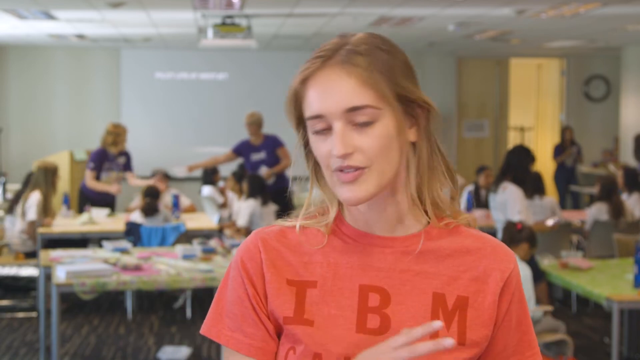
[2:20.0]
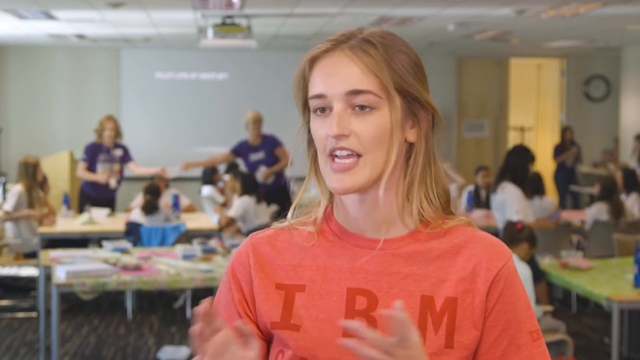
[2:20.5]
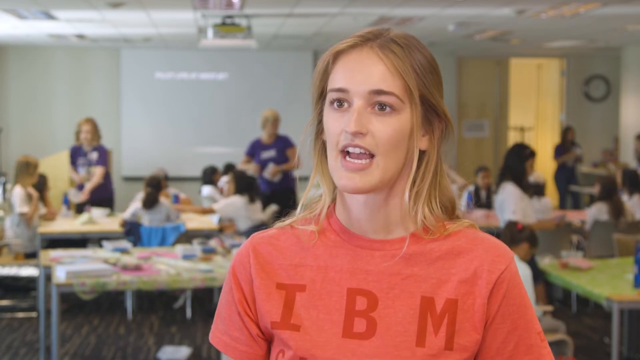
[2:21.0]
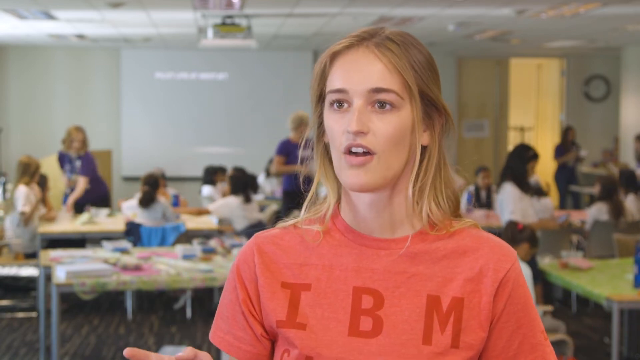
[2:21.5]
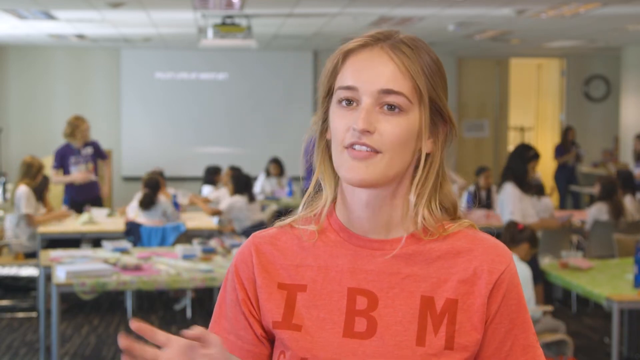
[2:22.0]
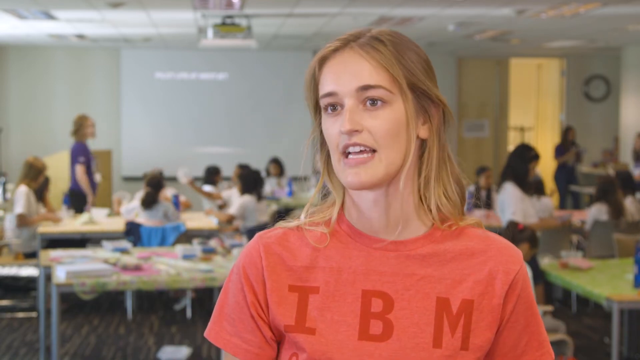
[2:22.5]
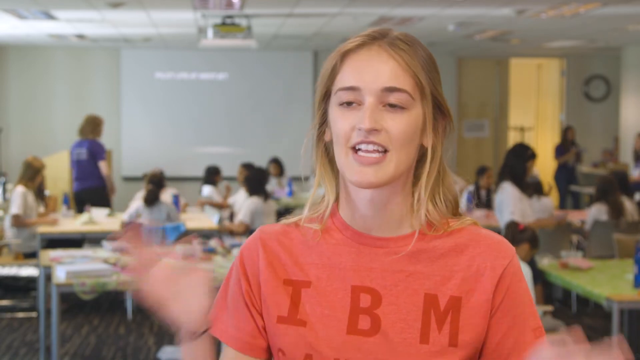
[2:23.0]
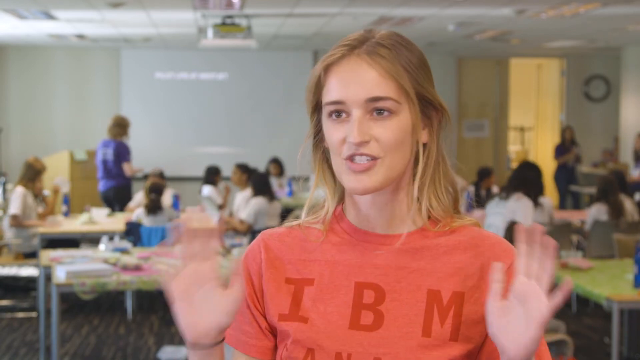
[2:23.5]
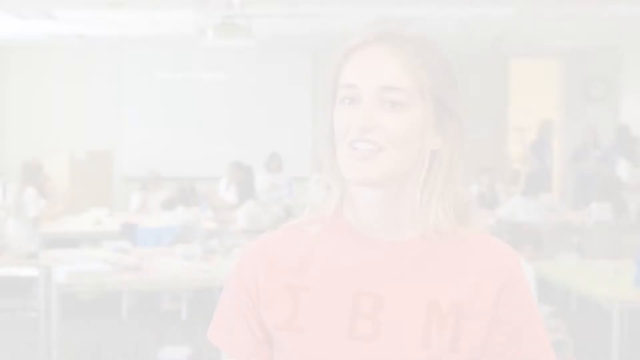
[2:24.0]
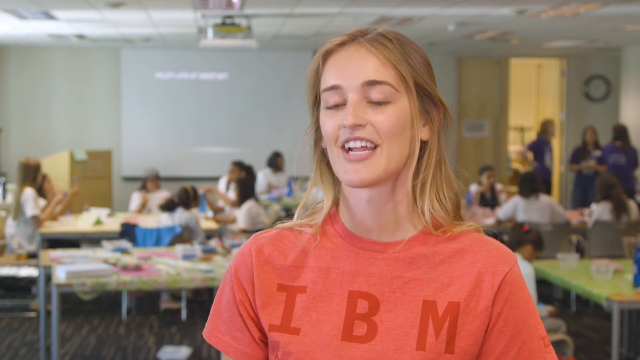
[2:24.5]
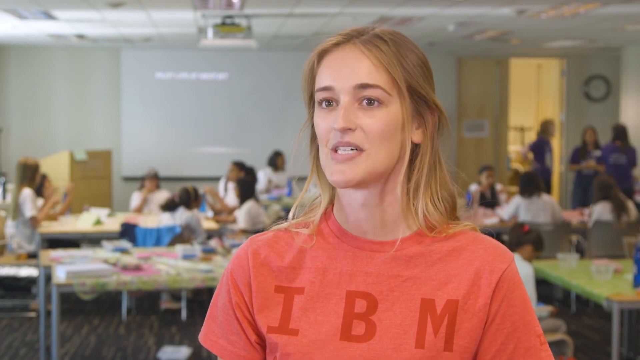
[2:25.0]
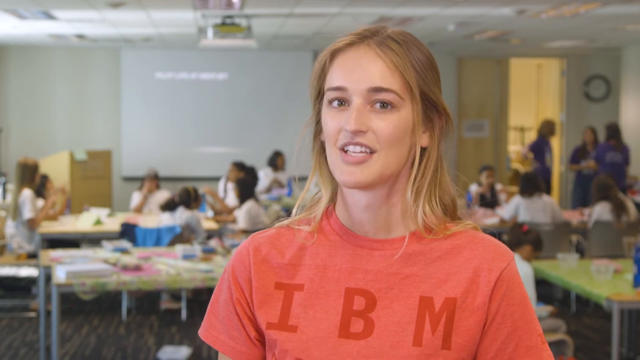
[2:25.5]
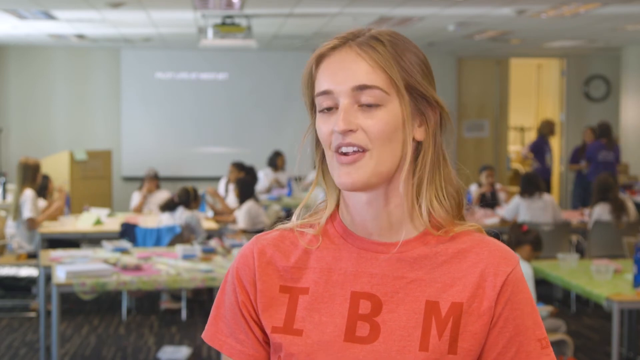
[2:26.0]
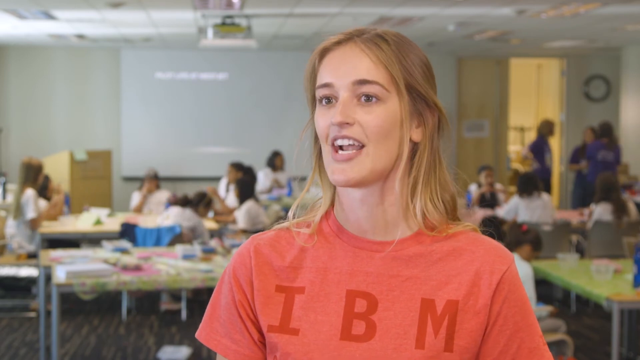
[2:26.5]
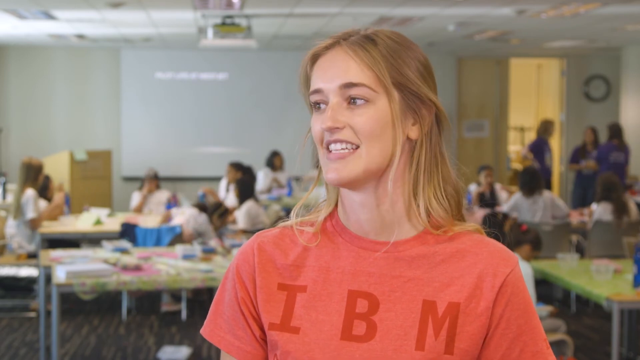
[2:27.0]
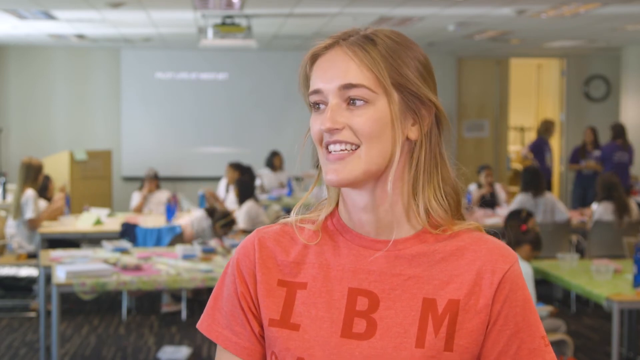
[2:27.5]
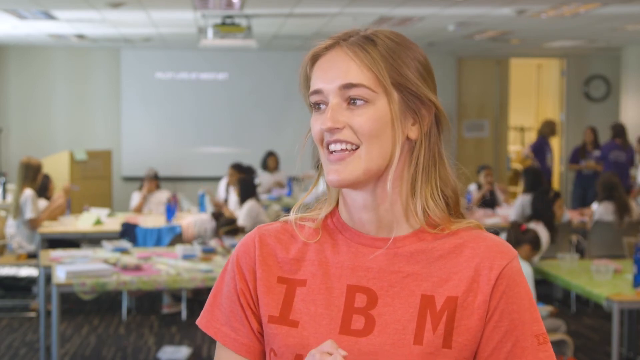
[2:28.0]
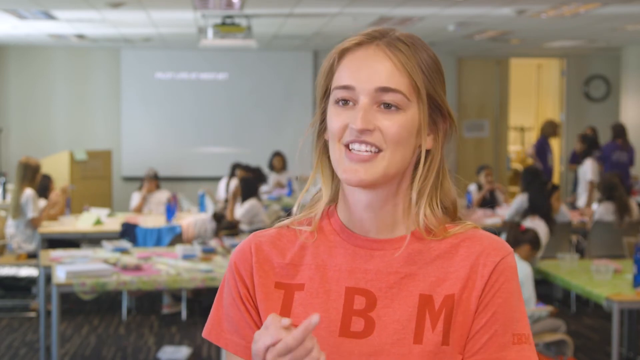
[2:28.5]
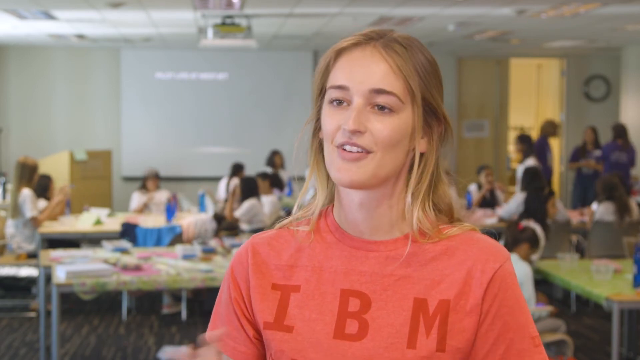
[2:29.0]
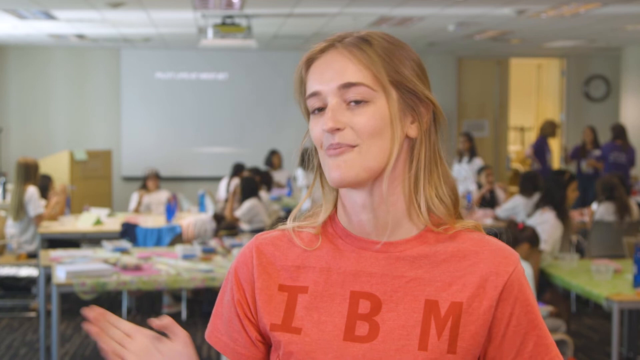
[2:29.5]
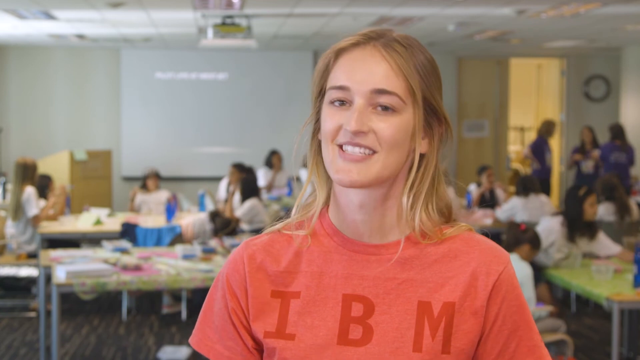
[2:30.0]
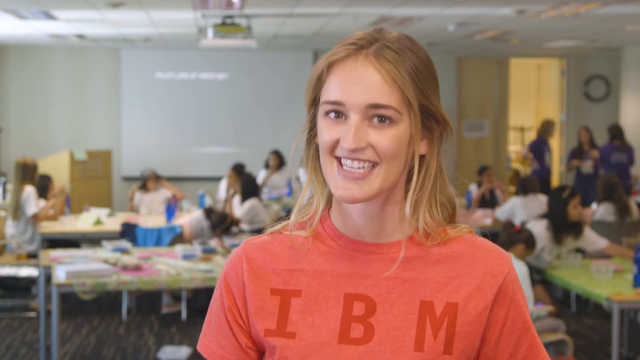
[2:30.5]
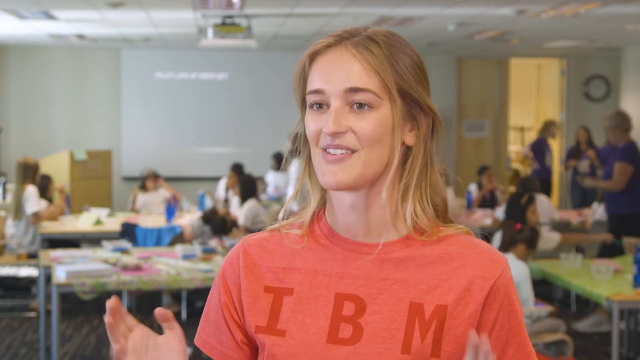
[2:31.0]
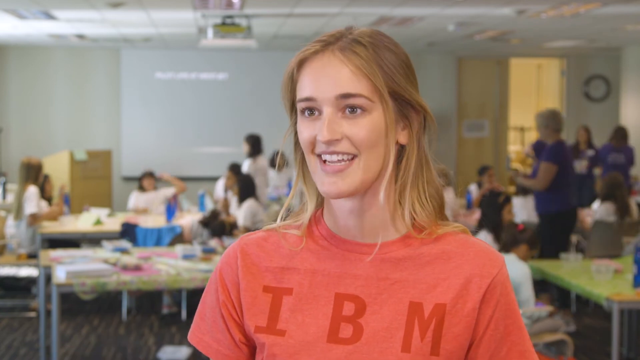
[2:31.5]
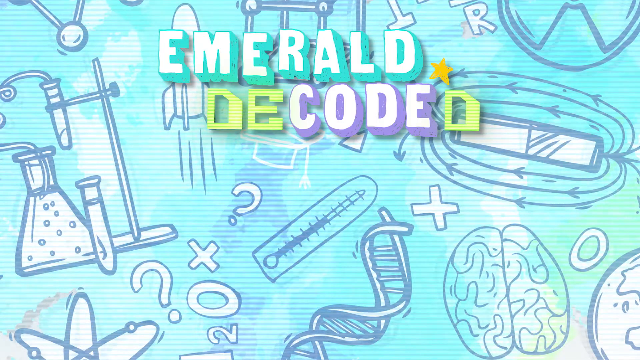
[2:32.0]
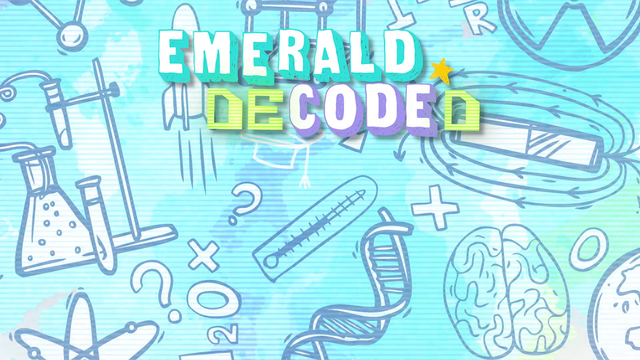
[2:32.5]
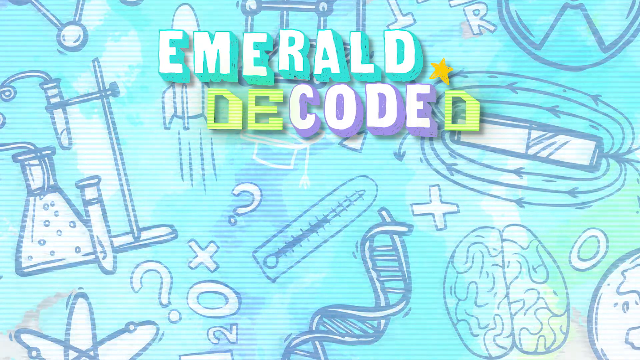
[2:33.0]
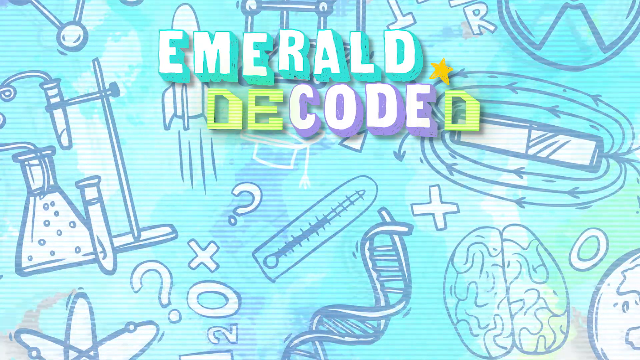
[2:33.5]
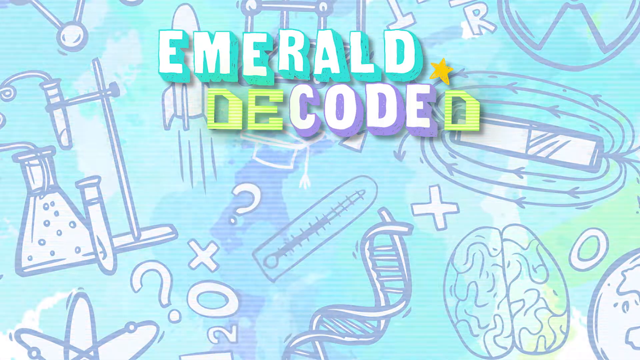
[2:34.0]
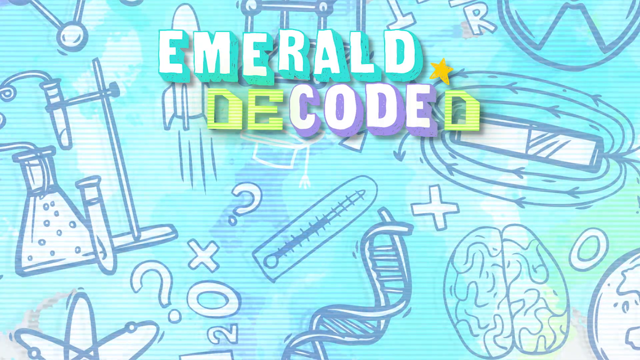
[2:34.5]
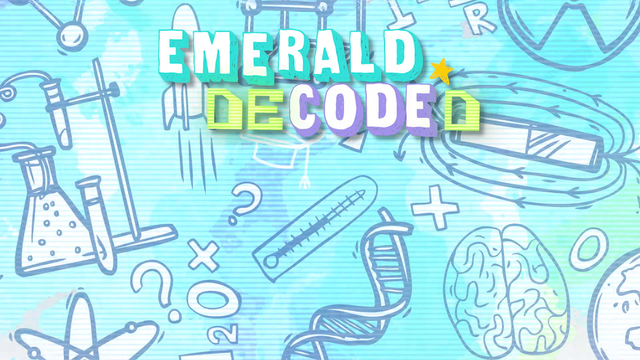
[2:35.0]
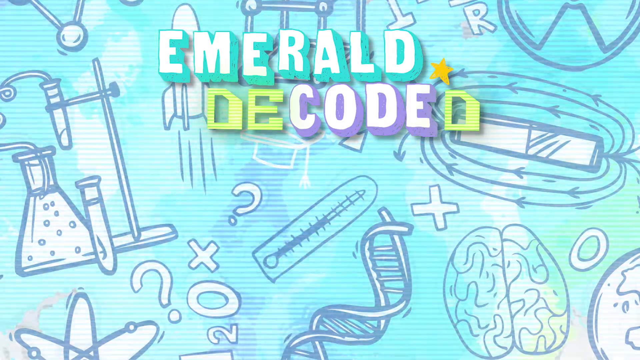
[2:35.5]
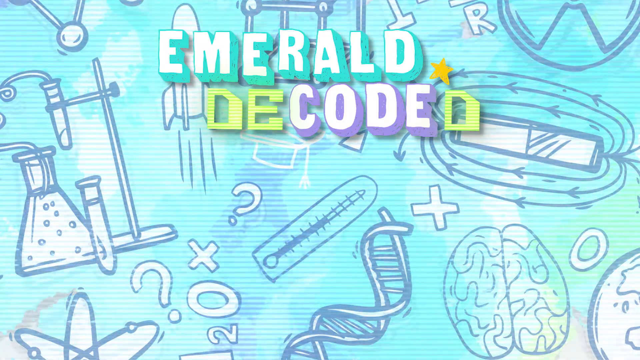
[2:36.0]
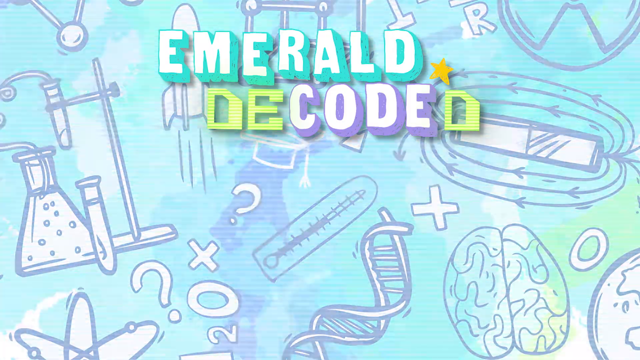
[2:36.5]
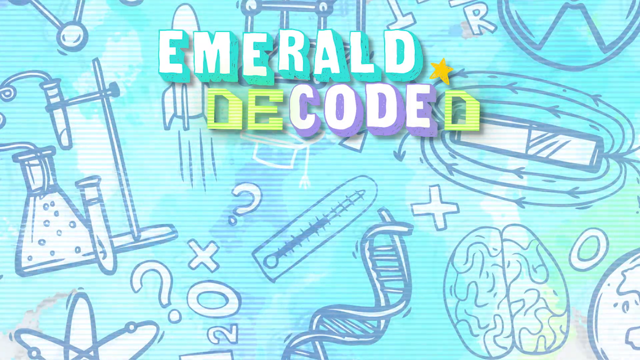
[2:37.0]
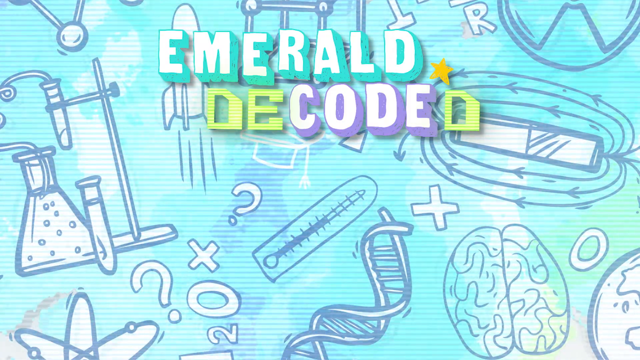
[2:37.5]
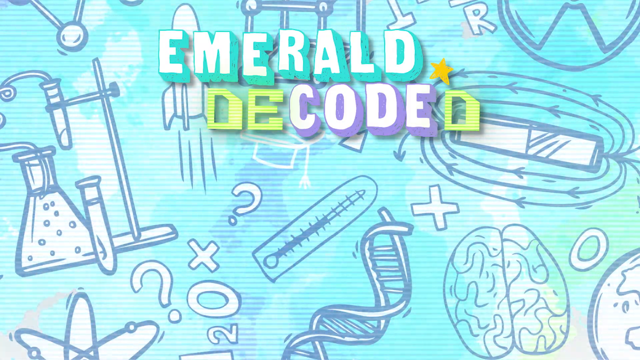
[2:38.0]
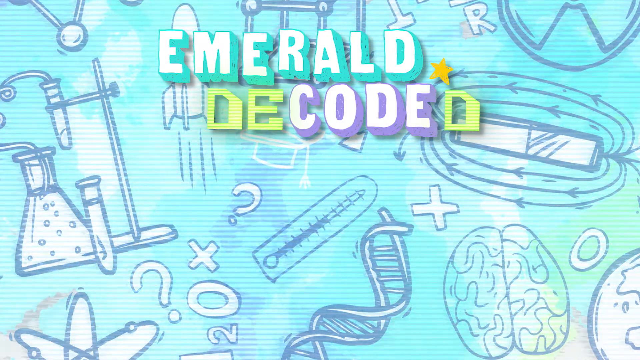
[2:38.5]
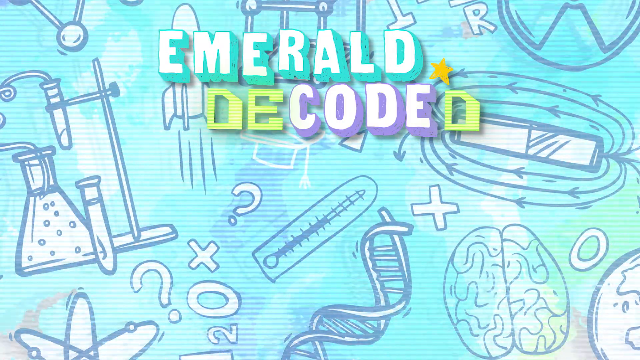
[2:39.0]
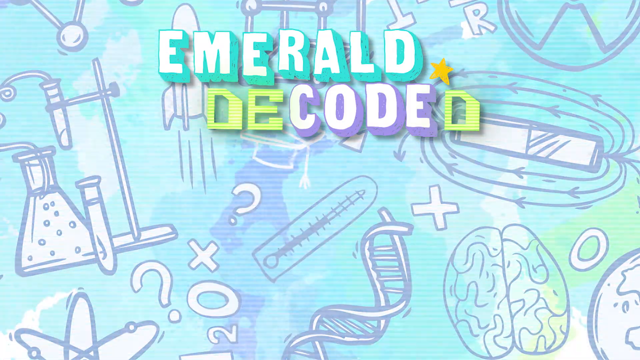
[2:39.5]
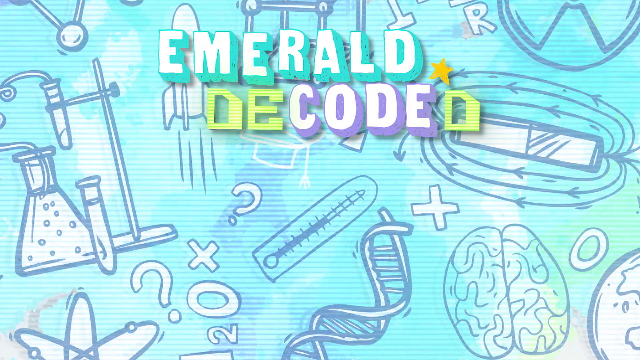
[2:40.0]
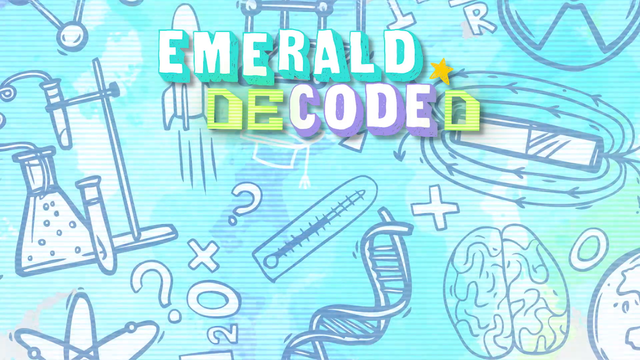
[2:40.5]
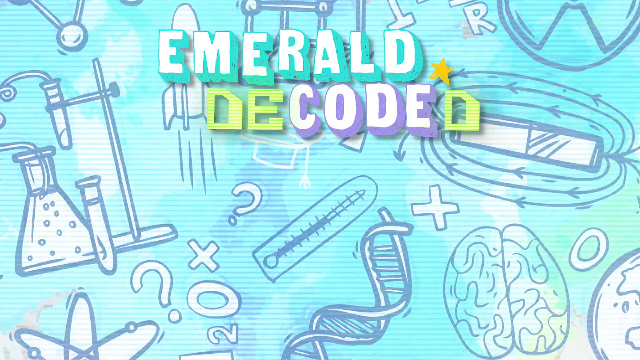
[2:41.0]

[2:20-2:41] In a science lab or arts and crafts classroom for elementary children, many young girls are present along with other teachers or volunteers, who wear purple shirts with some kind of writing that is blurred out. The main speaker, a young woman of about 25 with long blonde hair, brown eyes and white teeth, wears a salmon-colored t-shirt that says "IBM." She speaks with both hands moving in circles, then puts her hands together and waves them up and down as she speaks enthusiastically. The video changes to the light blue pencil drawing showing speakers, a rocket ship, a thermometer, a DNA strand, a plus sign, arrows, an electromagnetic current device and a human brain, with text saying "emerald decoding." It then changes back to the classroom, showing a girl in pink.